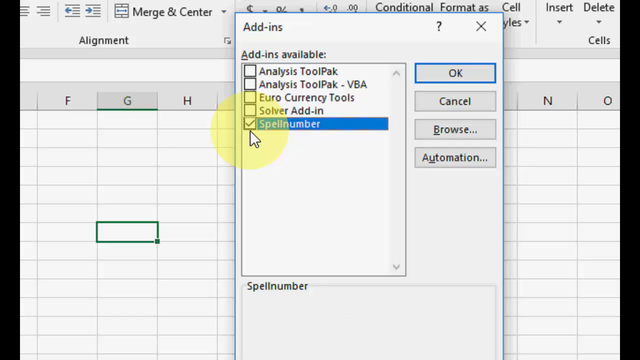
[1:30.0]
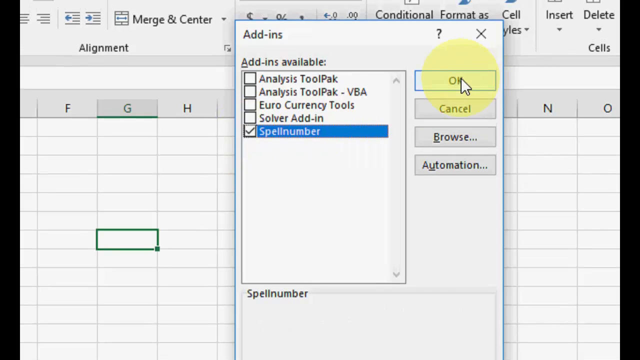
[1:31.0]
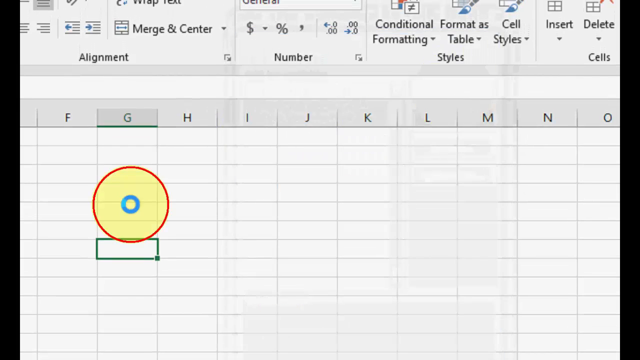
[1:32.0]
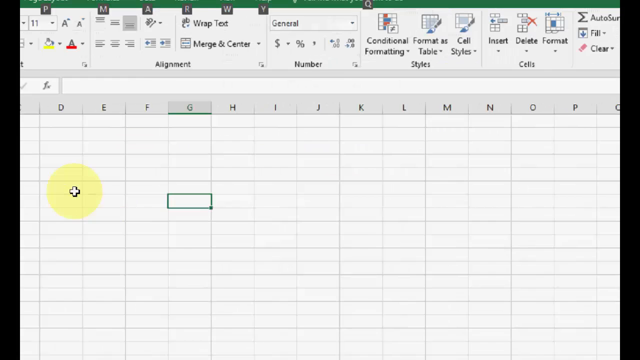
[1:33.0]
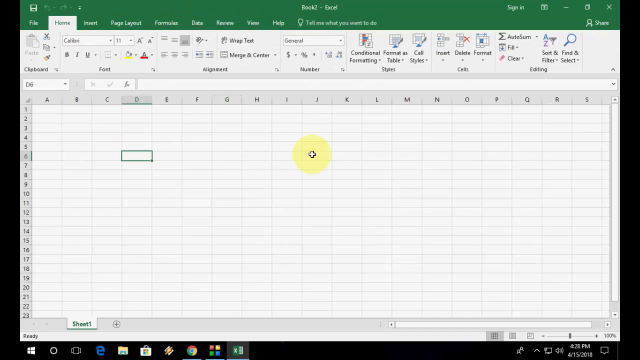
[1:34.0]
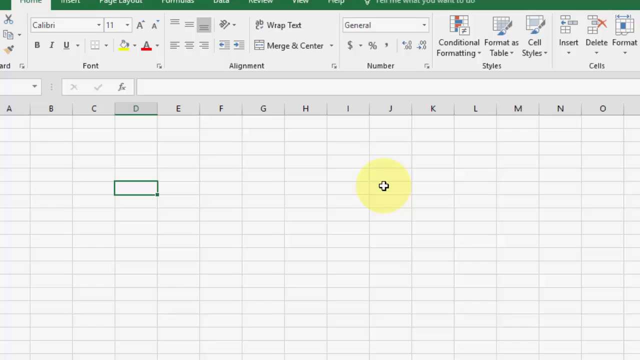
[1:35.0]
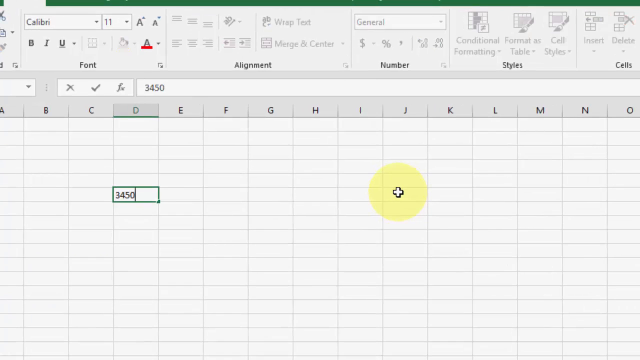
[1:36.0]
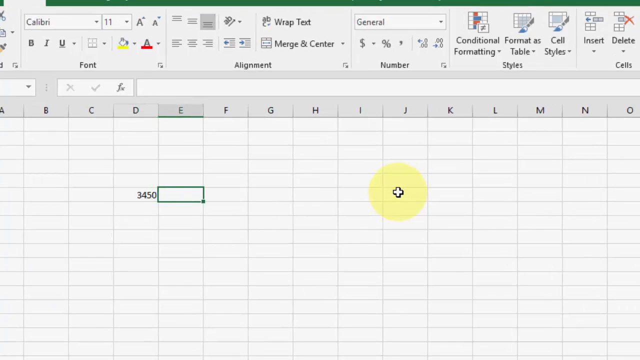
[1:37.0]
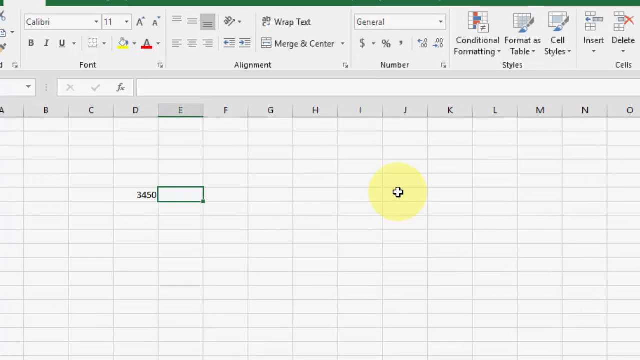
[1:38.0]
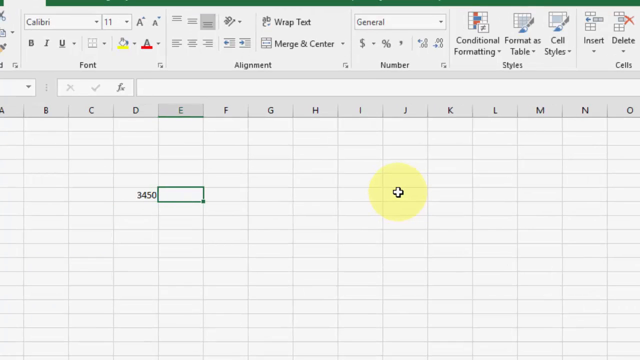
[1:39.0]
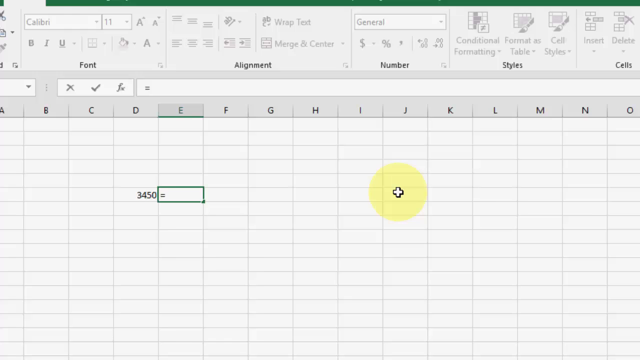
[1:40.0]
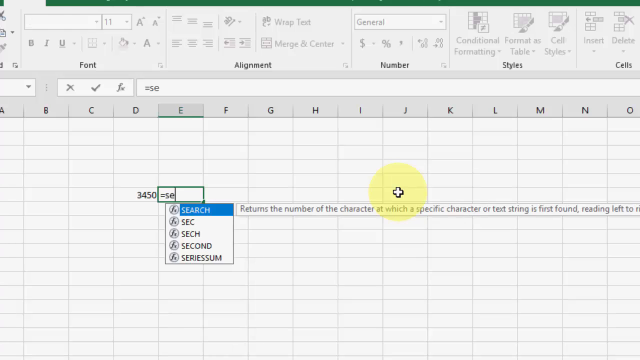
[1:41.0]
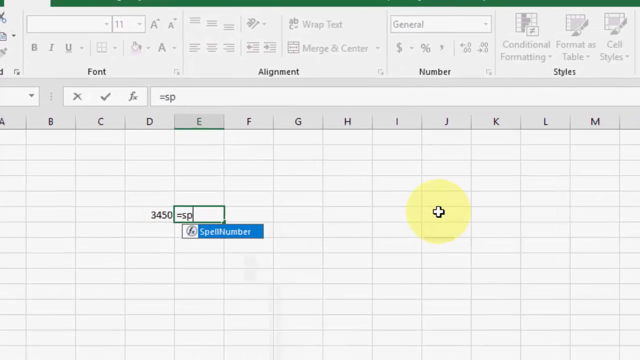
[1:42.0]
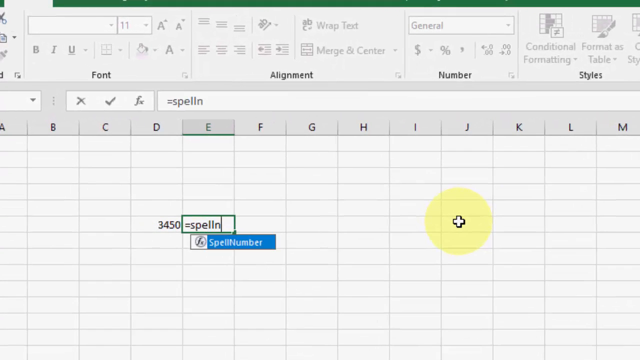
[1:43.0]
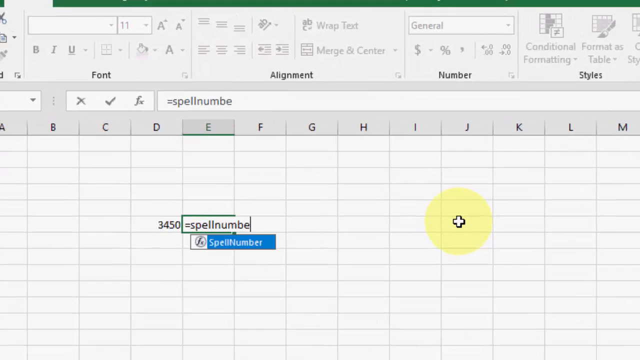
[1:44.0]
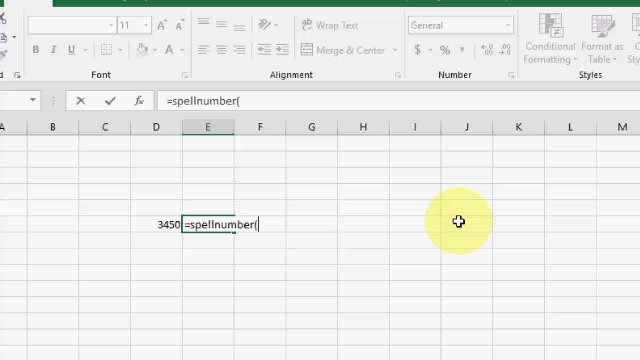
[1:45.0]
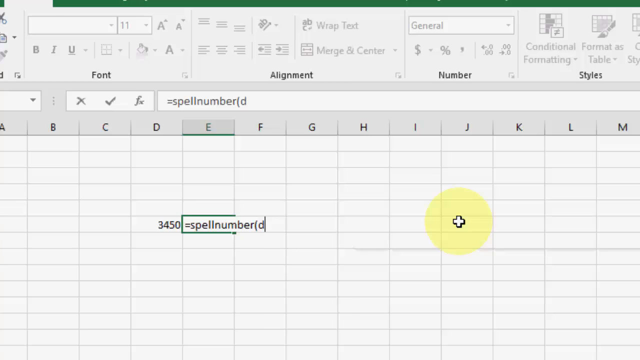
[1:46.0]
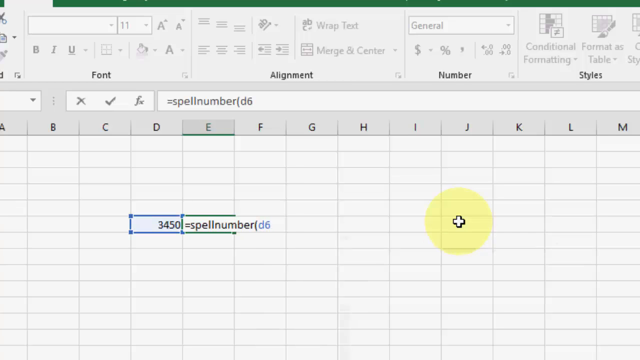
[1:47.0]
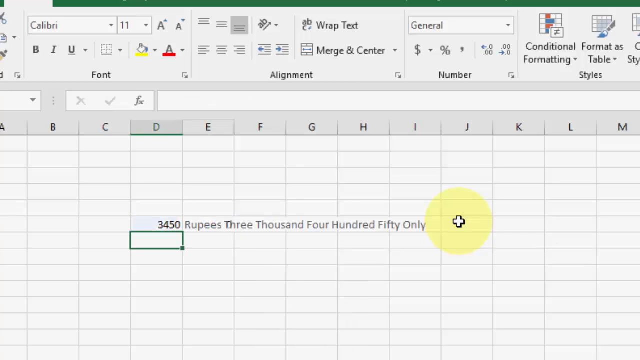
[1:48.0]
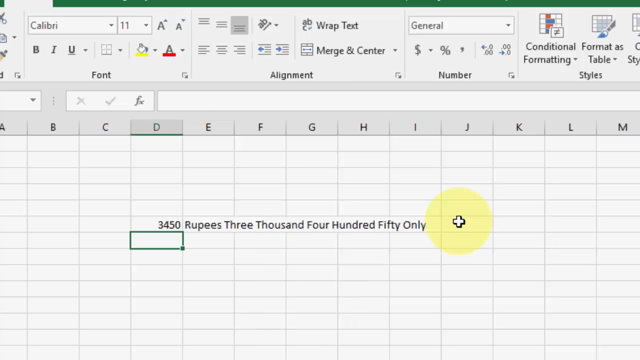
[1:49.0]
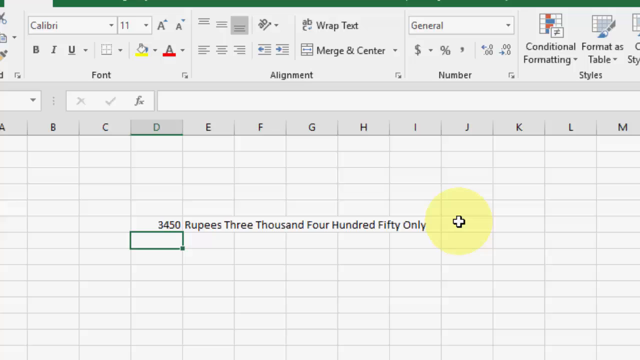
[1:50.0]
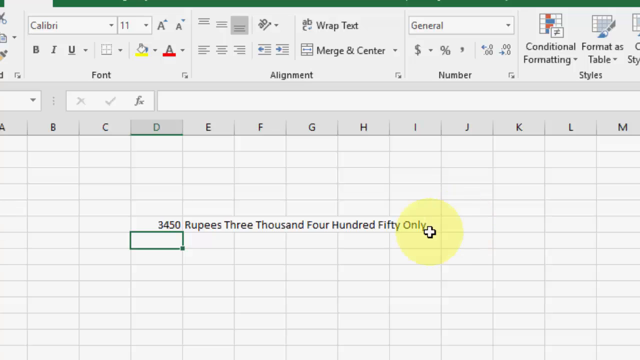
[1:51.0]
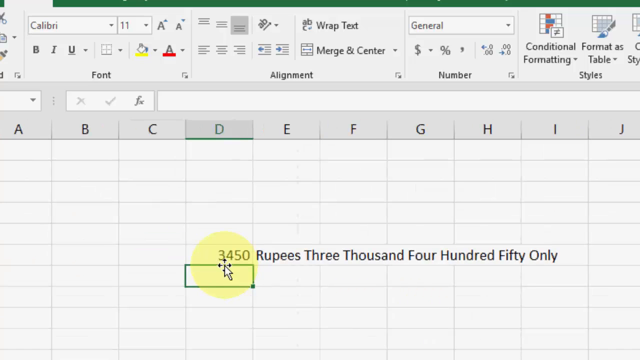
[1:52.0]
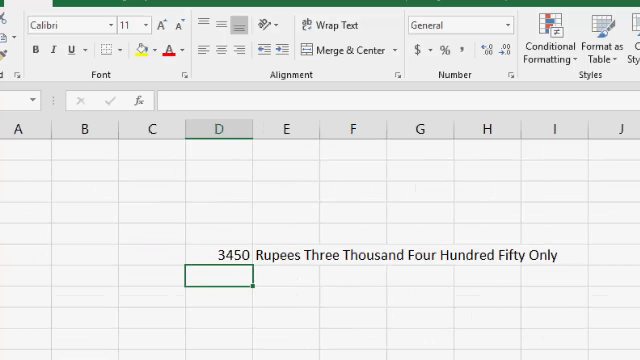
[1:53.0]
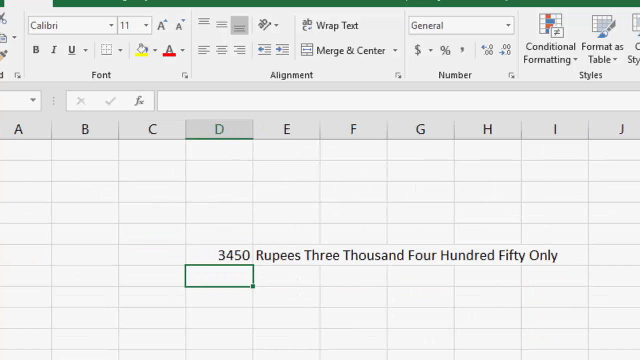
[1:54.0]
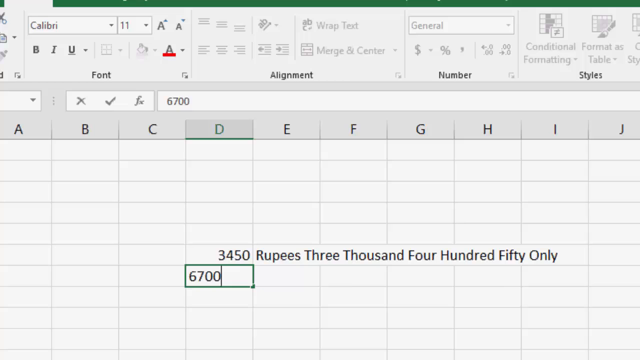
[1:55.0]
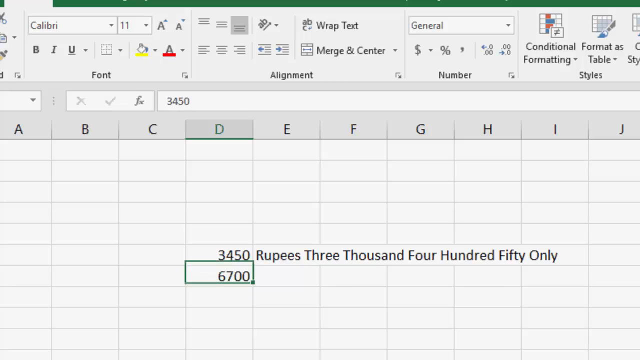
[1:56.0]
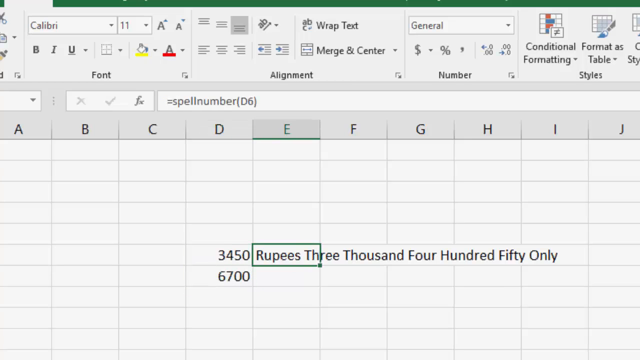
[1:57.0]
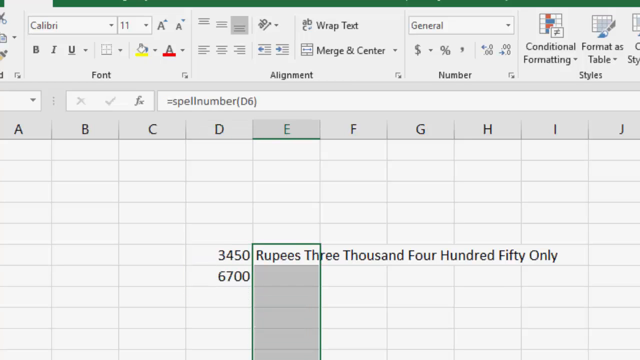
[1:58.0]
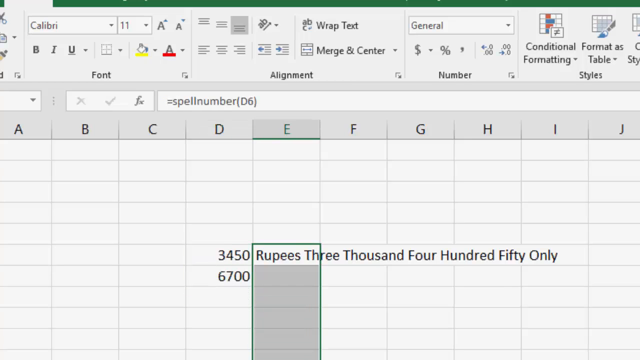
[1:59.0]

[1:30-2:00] After Spellnumber is checked, Okay is clicked and the window closes. Excel is shown zoomed in on a central section of the spreadsheet. The cursor is a plus sign and clicks on a cell, which is outlined in green. The full spreadsheet appears, then the view zooms in on column D, where 3450 is typed into a cell. The cell next to it is clicked and an equal sign is entered, which automatically populates into a formula. "SE" is typed and some menu shortcuts open, then it is erased, and D6 is entered with parentheses. Text appears that says "rupees 3,450 only". The cursor moves below the 3,450 and clicks on that cell, and zeros populate in that column.